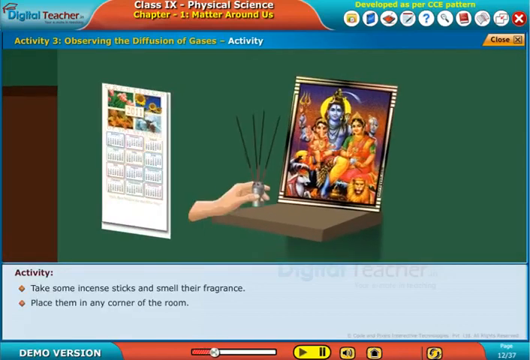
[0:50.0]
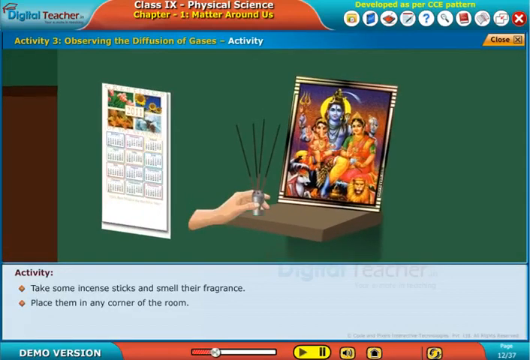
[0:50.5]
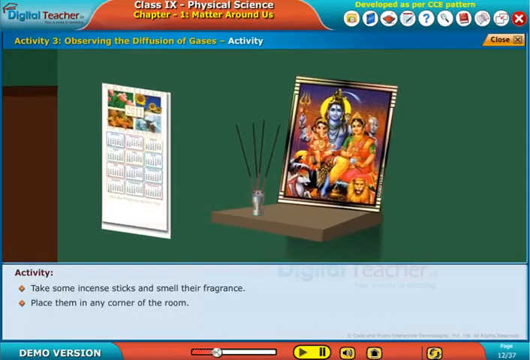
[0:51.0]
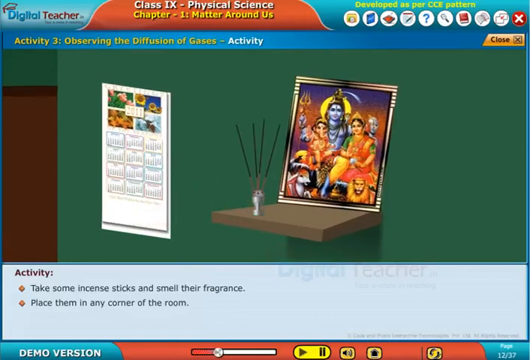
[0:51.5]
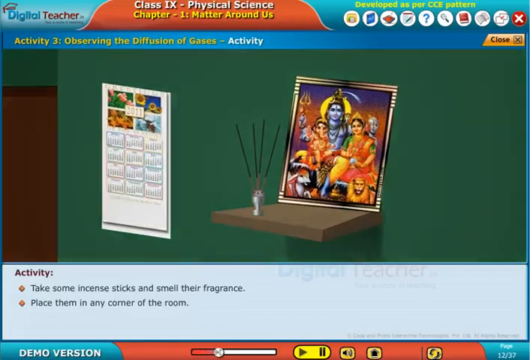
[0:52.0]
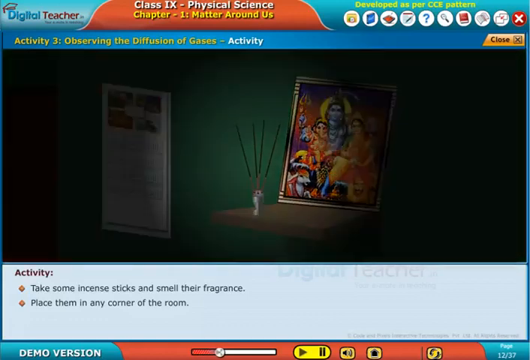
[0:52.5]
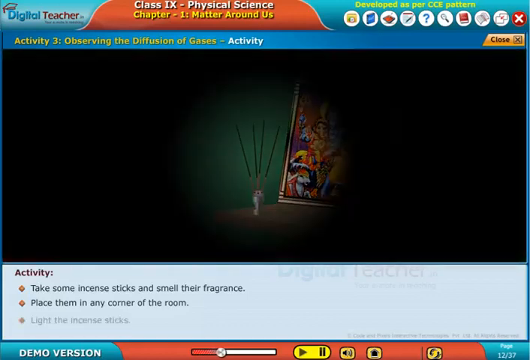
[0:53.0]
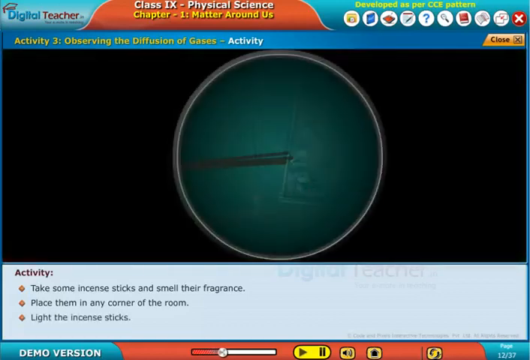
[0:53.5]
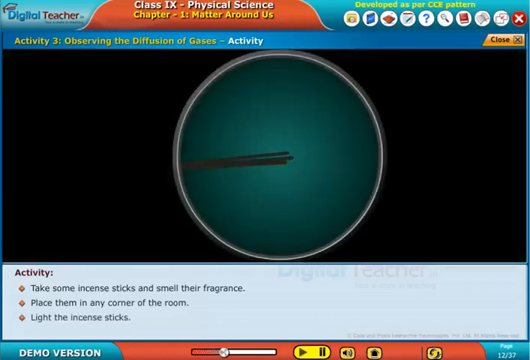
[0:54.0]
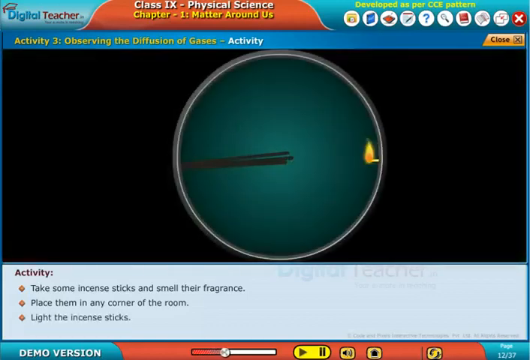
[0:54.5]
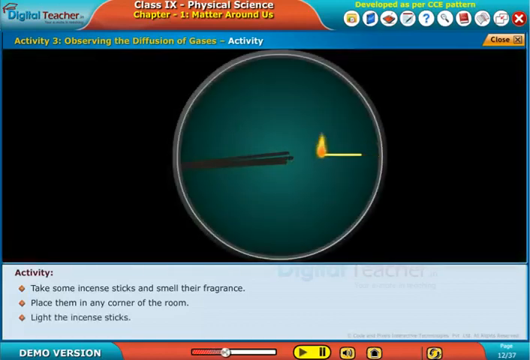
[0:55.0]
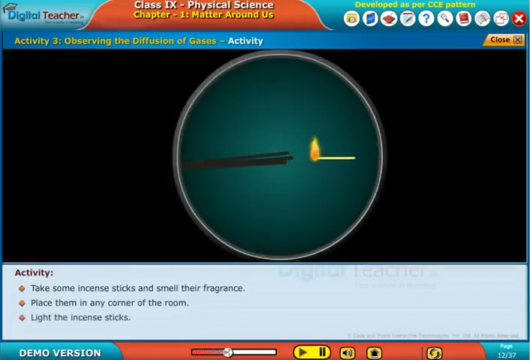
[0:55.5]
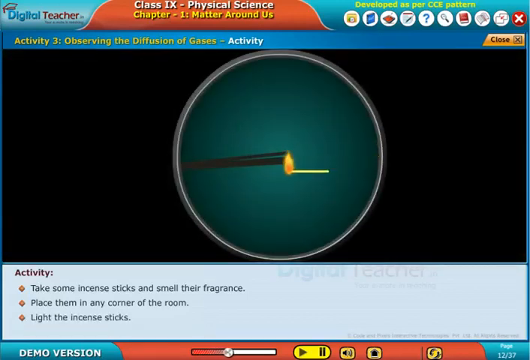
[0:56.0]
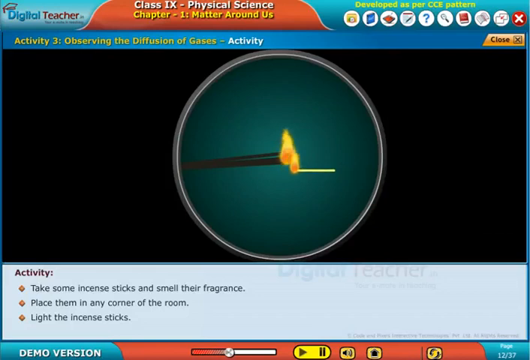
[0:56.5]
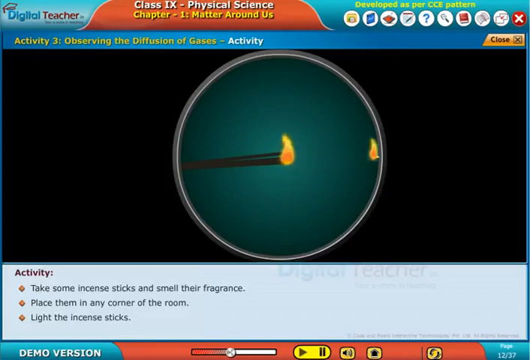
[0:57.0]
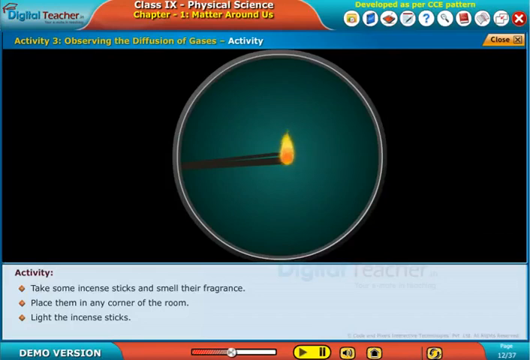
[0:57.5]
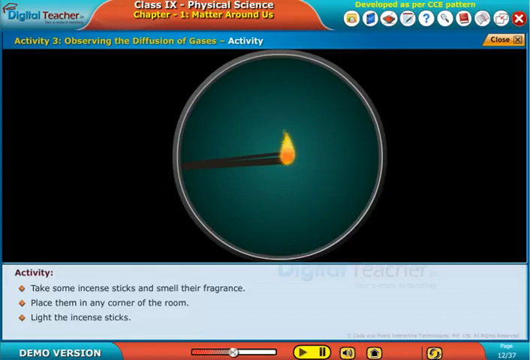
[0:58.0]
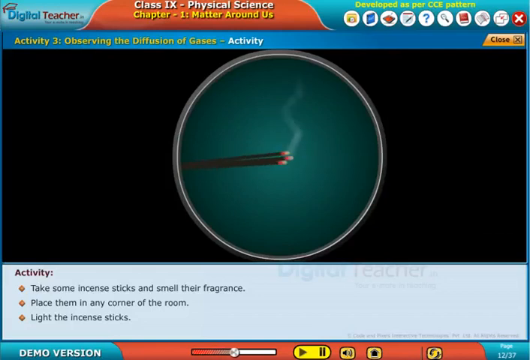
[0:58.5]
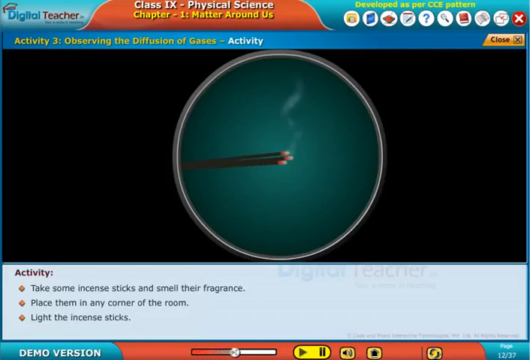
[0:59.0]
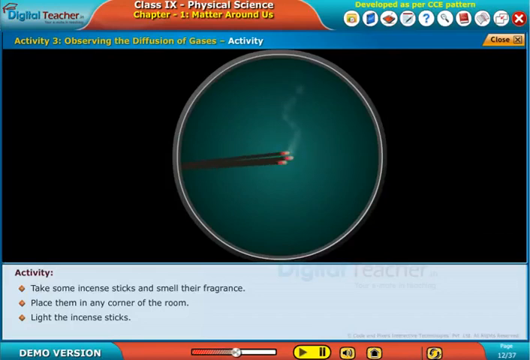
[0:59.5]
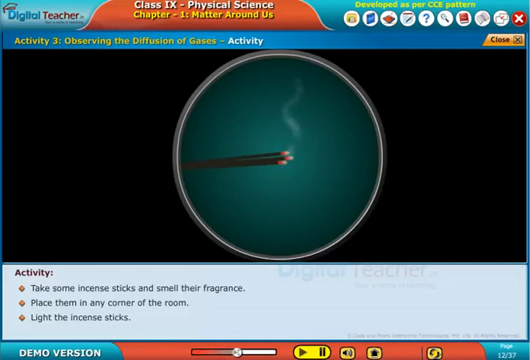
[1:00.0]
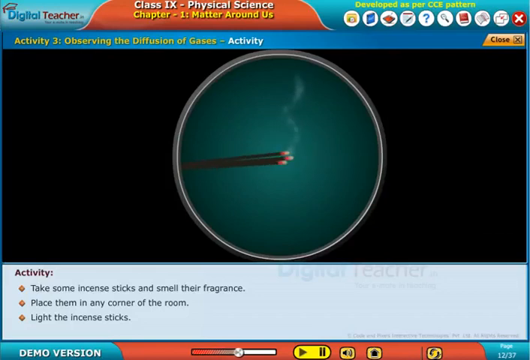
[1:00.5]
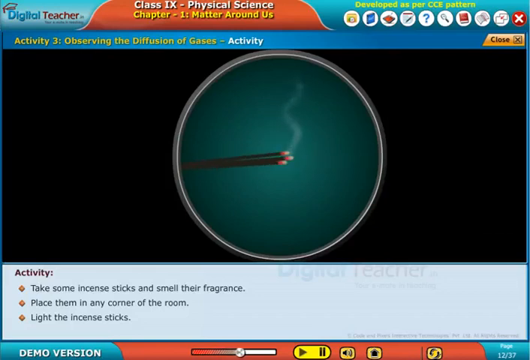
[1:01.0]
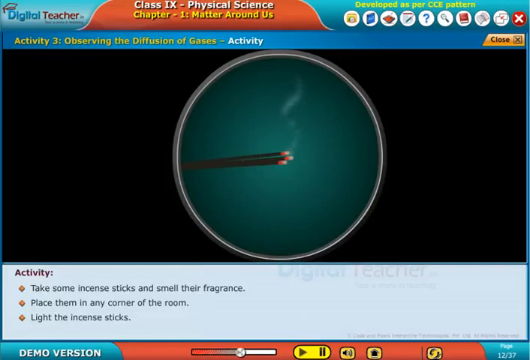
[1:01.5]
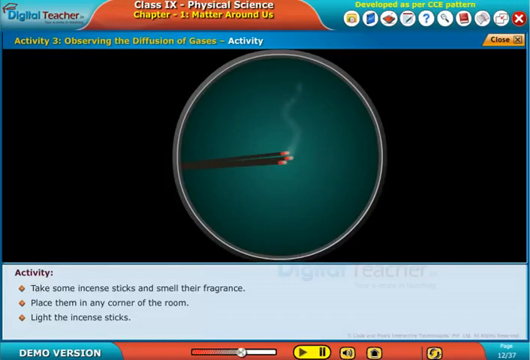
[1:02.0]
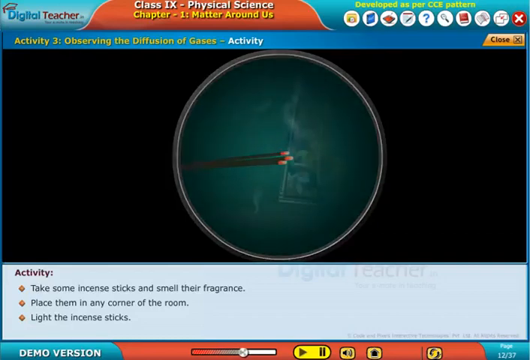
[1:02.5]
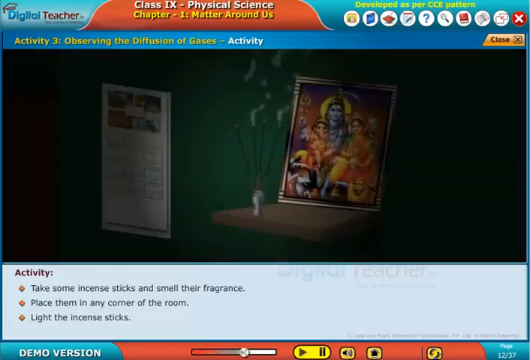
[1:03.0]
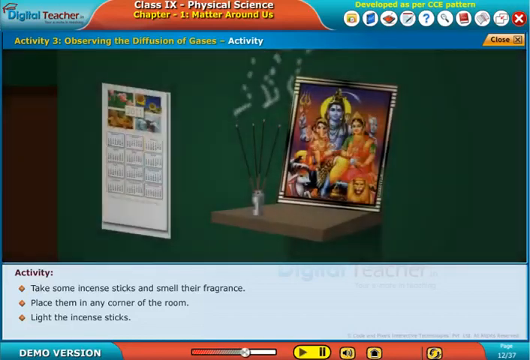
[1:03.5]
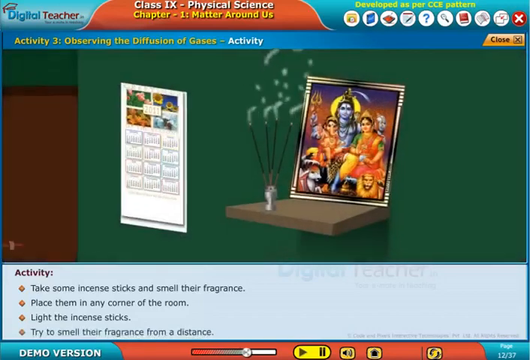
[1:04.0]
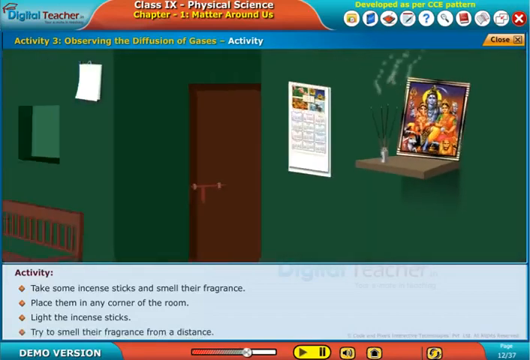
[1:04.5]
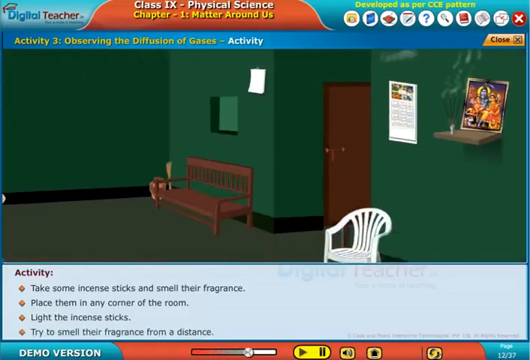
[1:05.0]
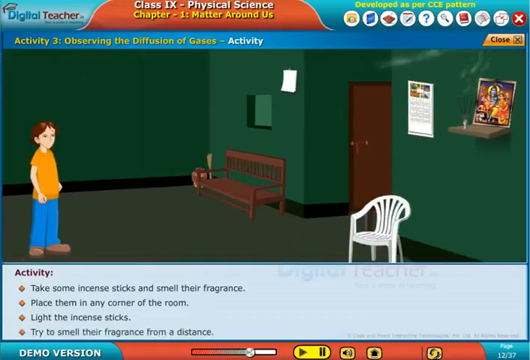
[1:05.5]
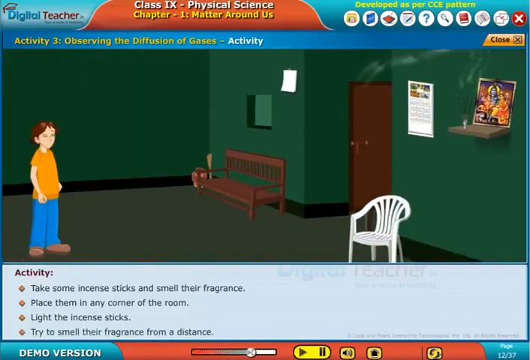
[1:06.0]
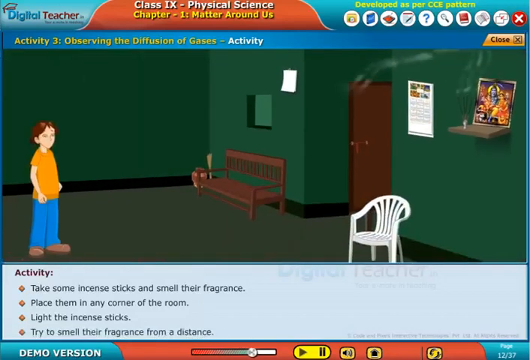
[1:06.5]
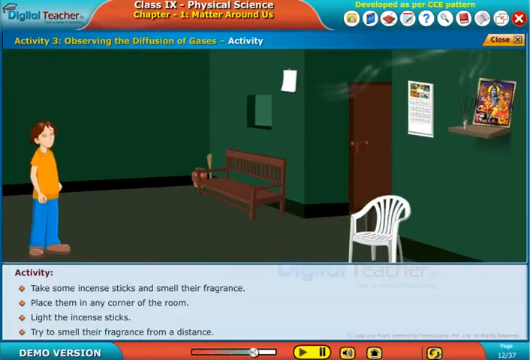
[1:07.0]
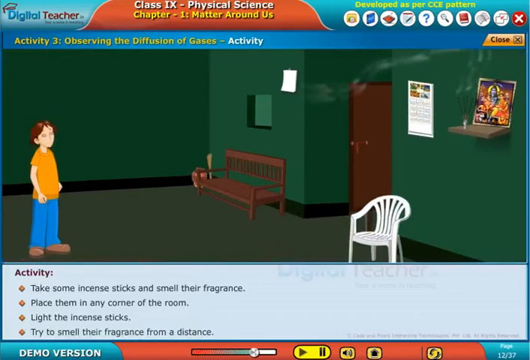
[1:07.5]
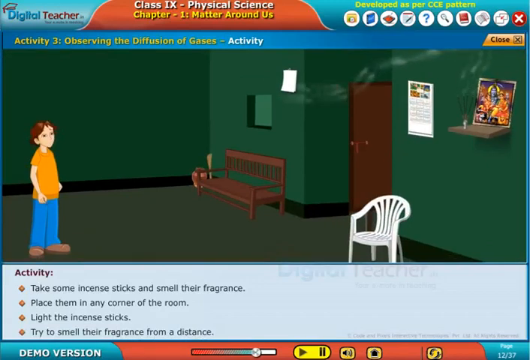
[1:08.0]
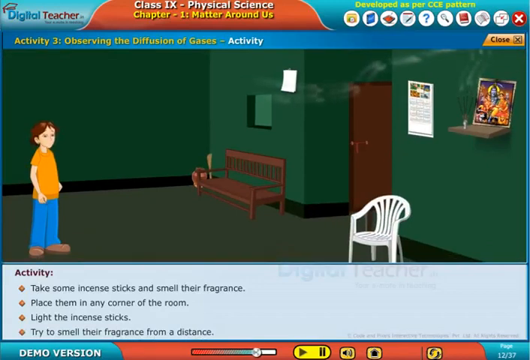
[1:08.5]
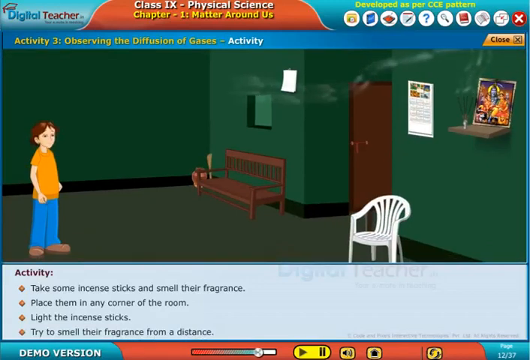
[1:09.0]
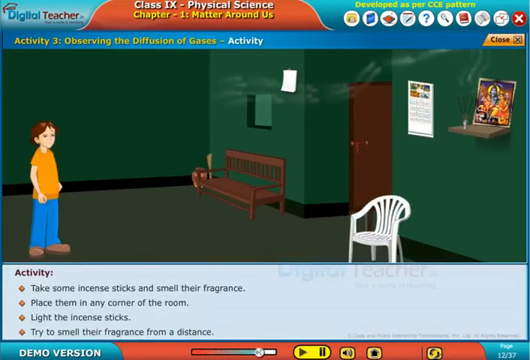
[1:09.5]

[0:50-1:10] A brown shelf is inserted into a green wall. On top of the green wall is a picture frame with three people in it wearing their attires, and a hand holds four sticks right at the top of the shelf. On the left side a 2011 calendar hangs on the wall, and on the far left is a brown door. The activity text says "take some incense sticks and smell their fragrance. Place them in a corner of the room." The hand places the incense on the shelf, then a match lights the incense. Smoke comes from the incense and goes around the room. A person wearing an orange top and blue pants stands in the middle of the room, and the smoke heads toward this person.